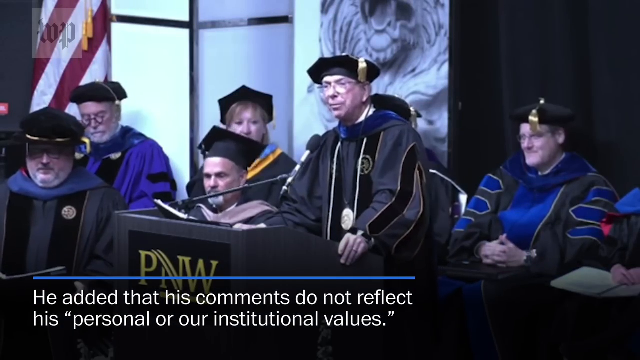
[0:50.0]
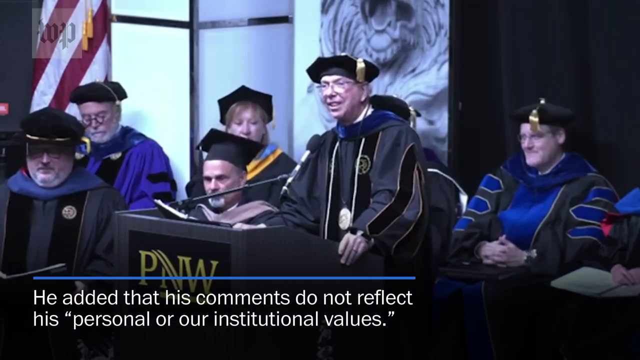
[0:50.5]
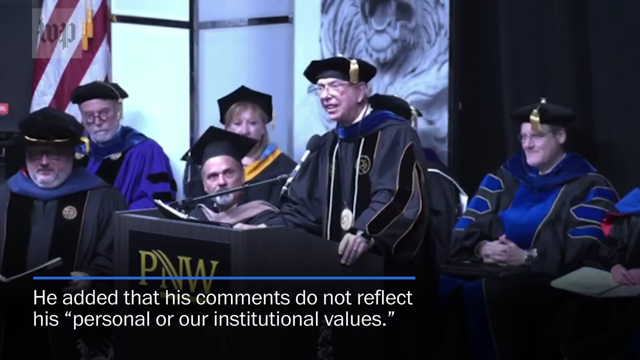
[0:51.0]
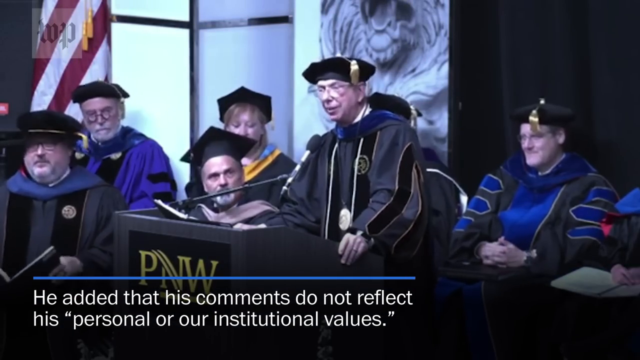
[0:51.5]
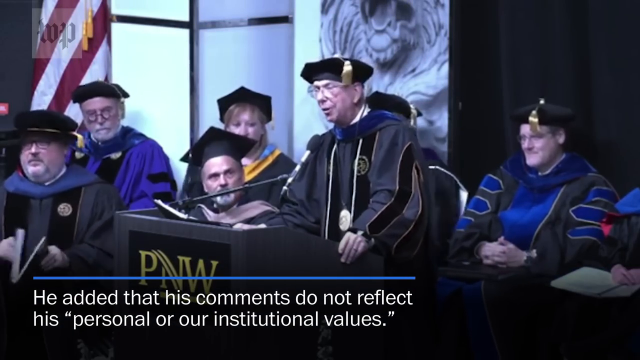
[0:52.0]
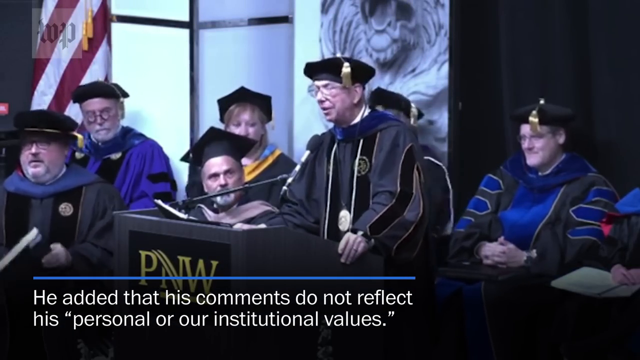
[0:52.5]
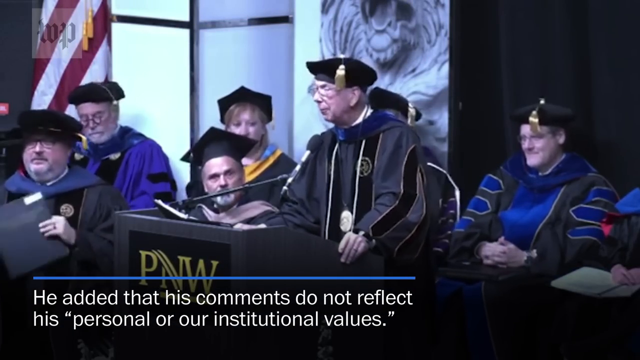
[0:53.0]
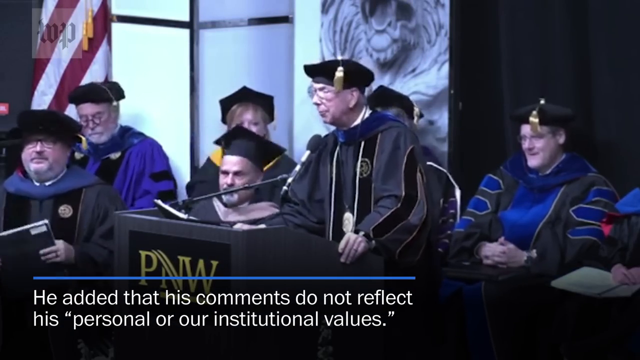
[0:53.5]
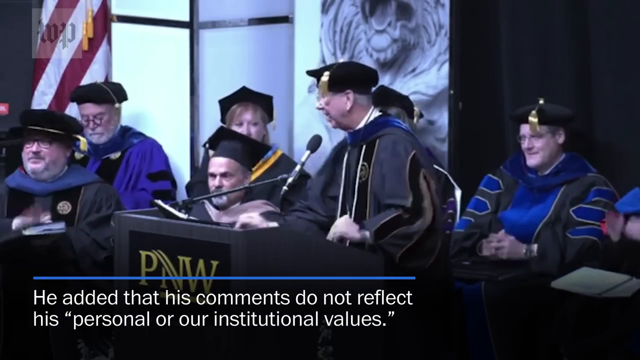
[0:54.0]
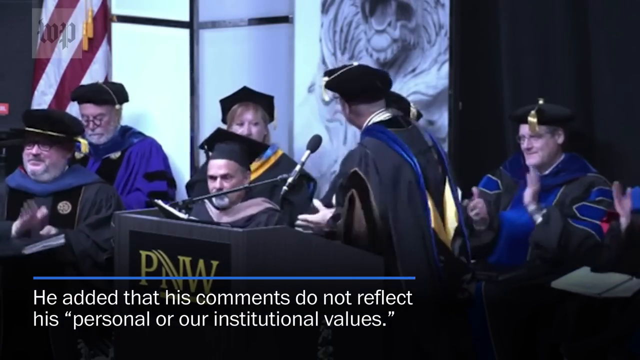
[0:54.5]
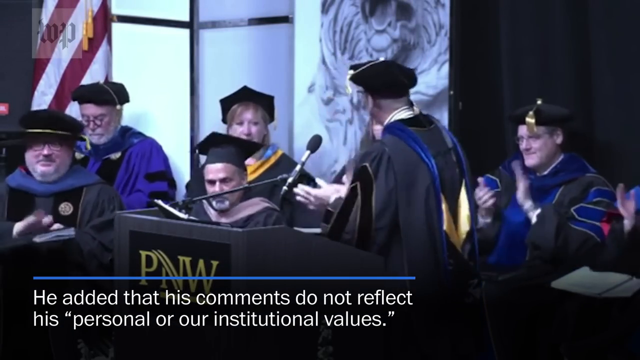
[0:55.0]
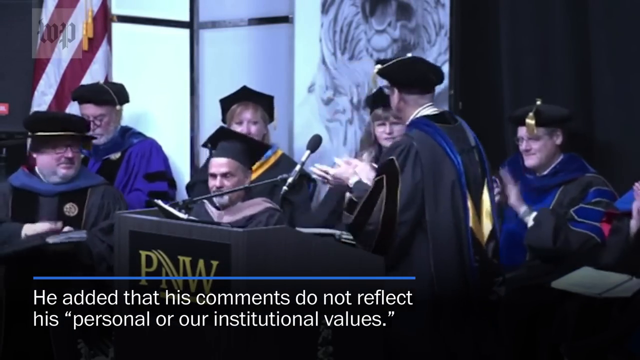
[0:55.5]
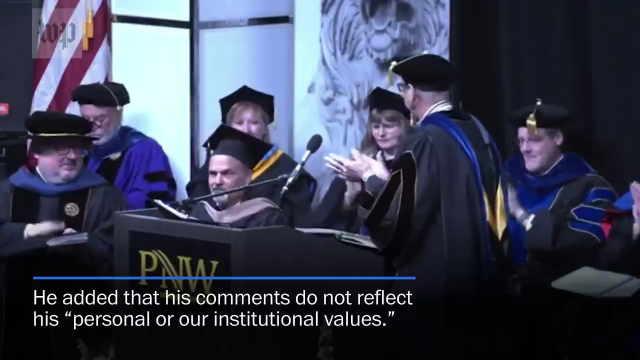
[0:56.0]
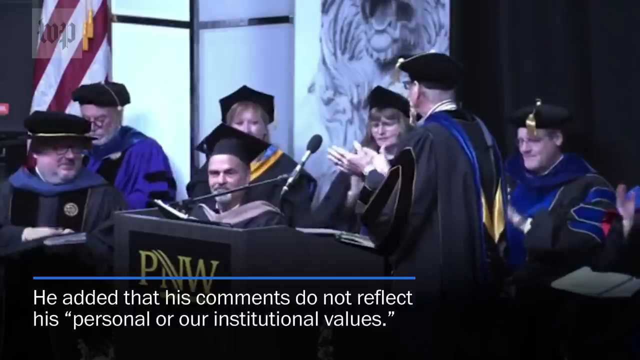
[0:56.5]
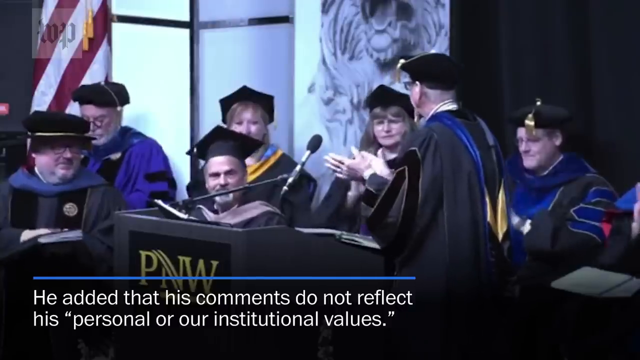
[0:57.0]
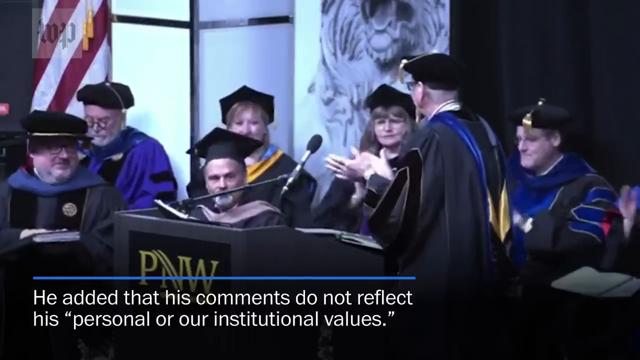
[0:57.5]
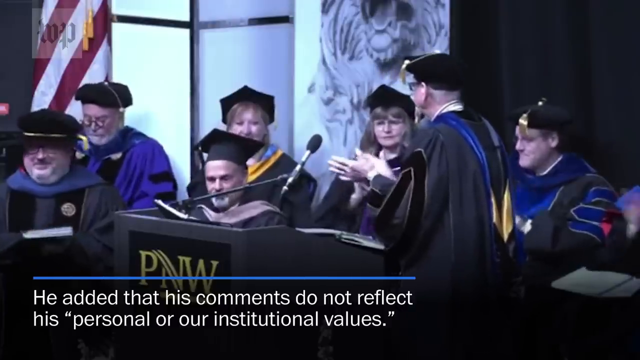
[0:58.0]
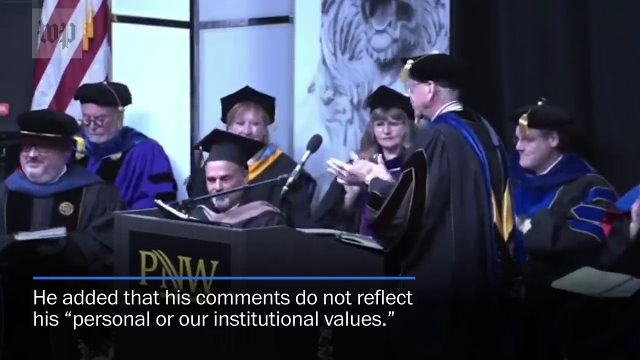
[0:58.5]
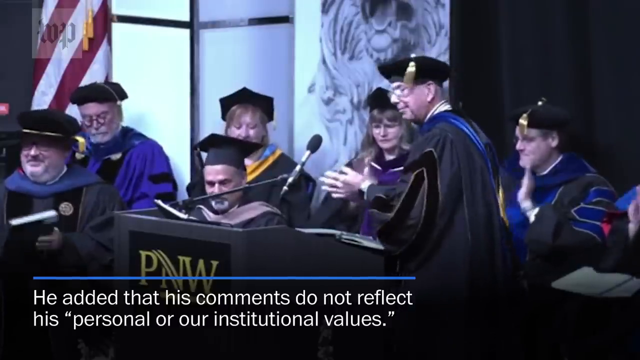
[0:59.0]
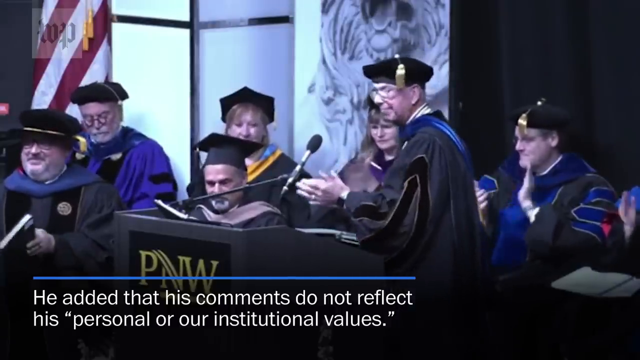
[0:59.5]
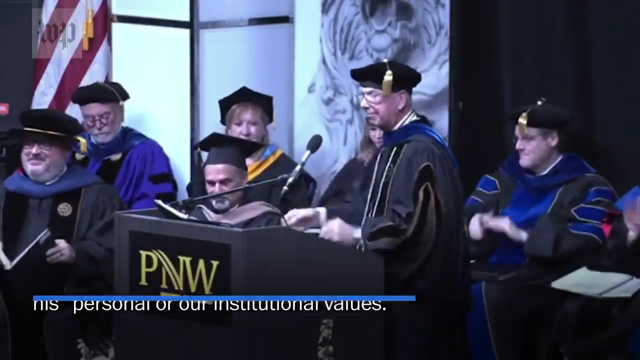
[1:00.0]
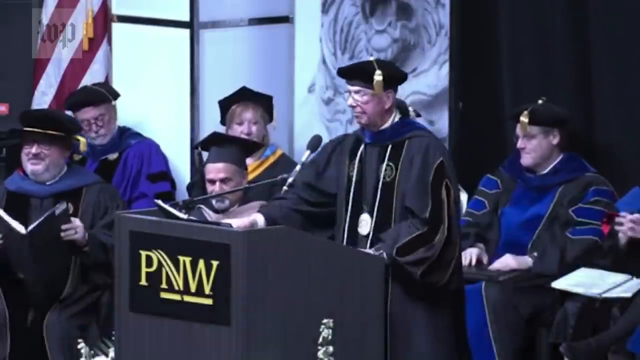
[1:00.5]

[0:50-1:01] The keynote speaker is back at the podium. All of the people on stage are clapping in the direction of Chancellor Keon; they mostly look uncomfortable, and he looks uncomfortable as well. Text at the bottom of the screen reads "He added that his comments do not reflect his personal or our institutional values," with a blue line above it. The podium says "PNW." An American flag is on the left side of the screen, a lion appears on a screen towards the center, and the Washington Post watermark is in the top left corner.